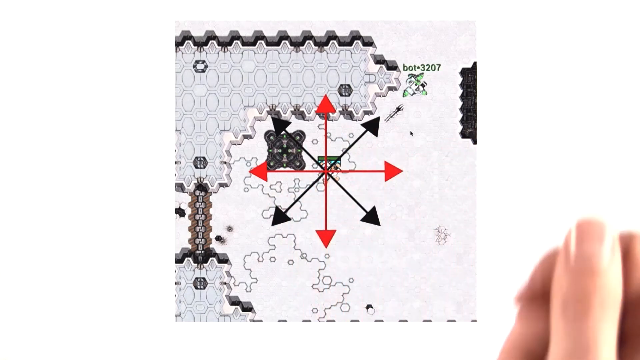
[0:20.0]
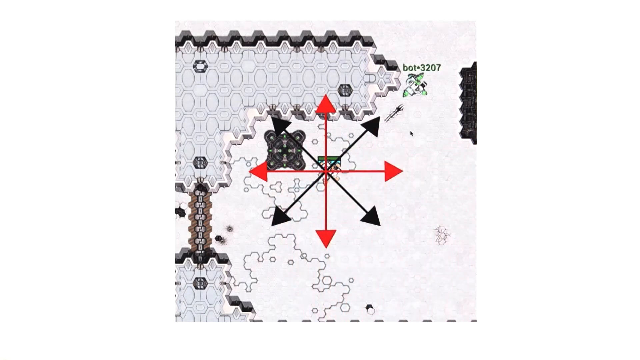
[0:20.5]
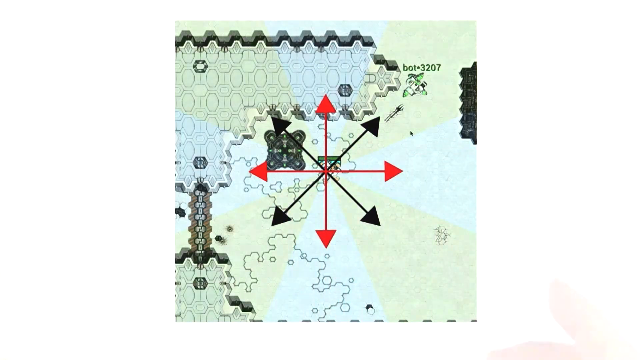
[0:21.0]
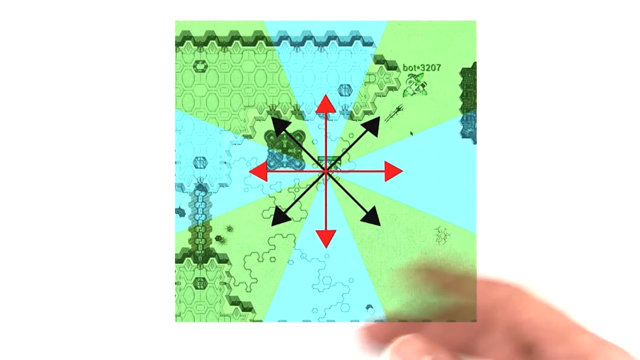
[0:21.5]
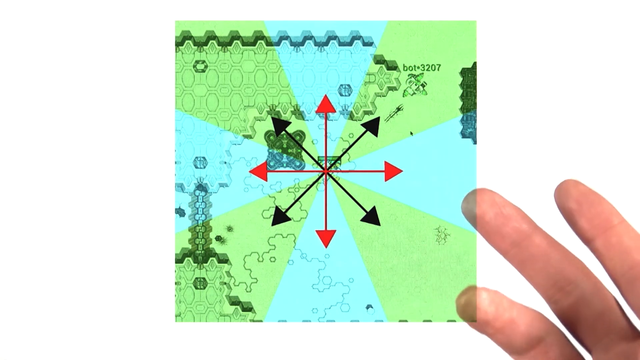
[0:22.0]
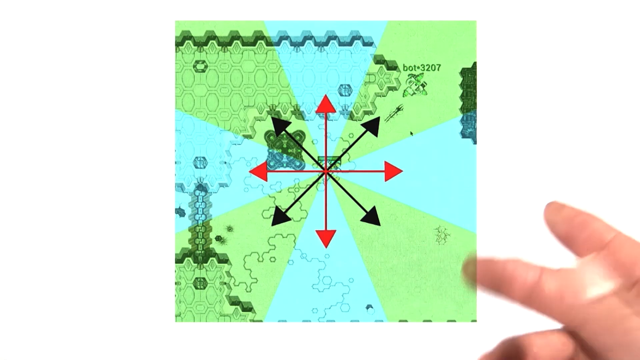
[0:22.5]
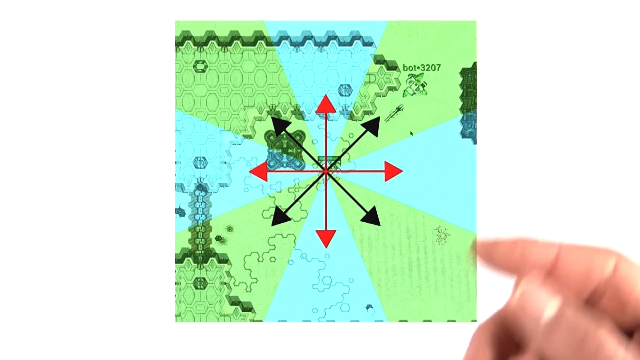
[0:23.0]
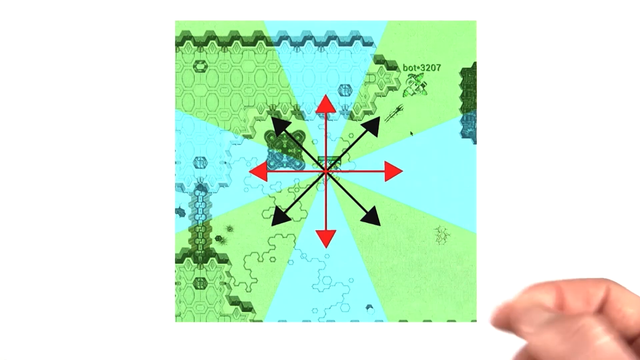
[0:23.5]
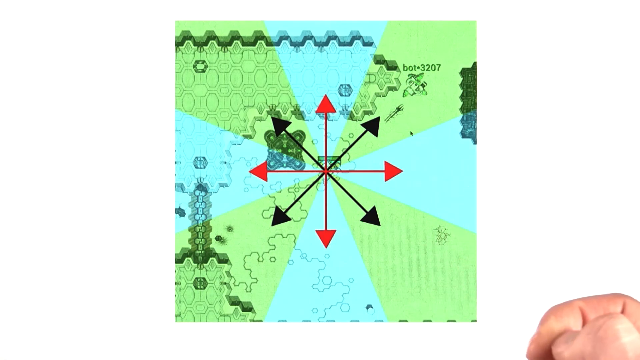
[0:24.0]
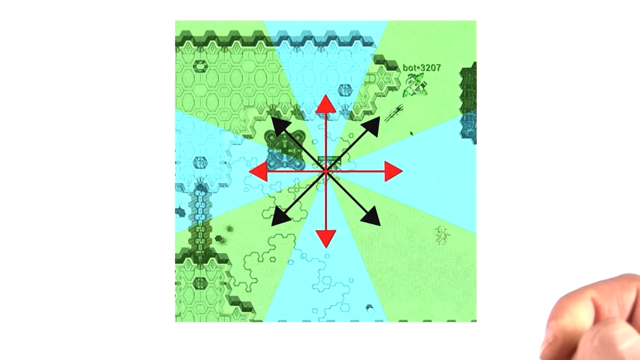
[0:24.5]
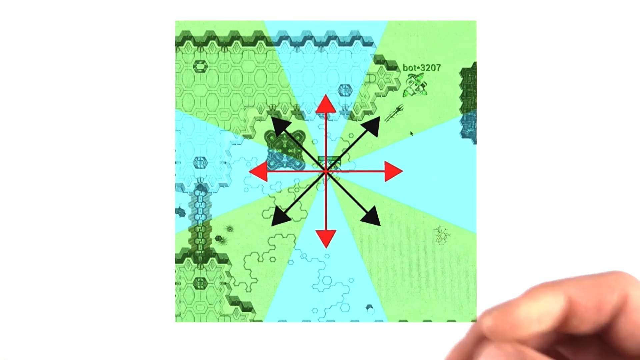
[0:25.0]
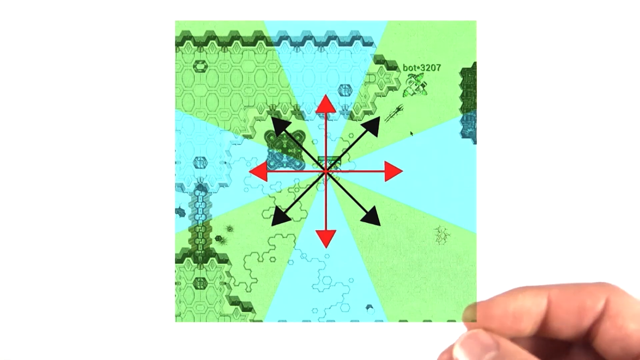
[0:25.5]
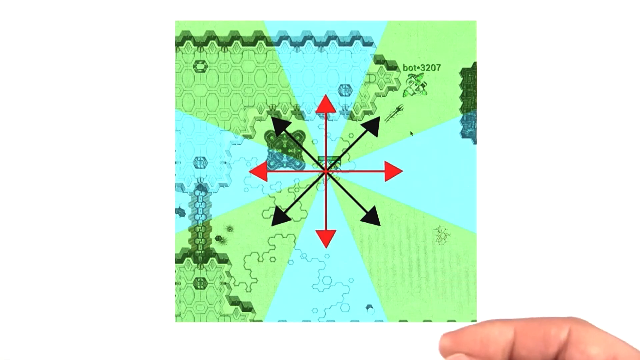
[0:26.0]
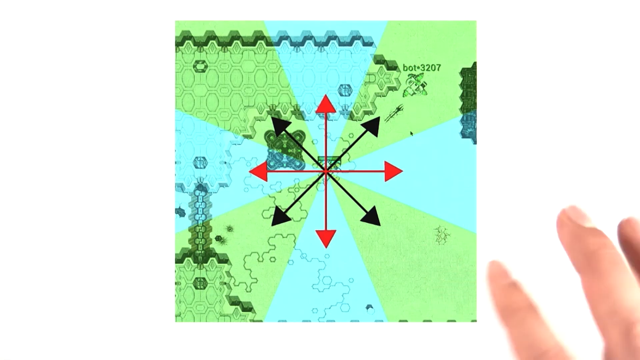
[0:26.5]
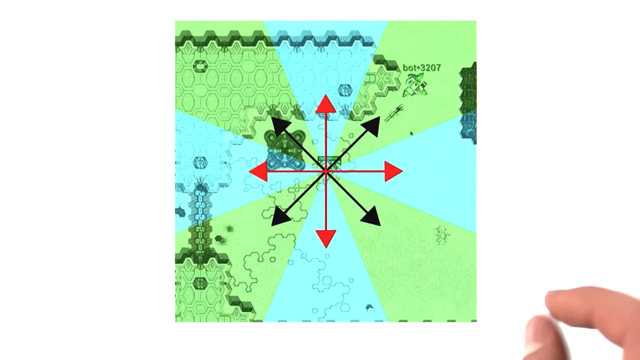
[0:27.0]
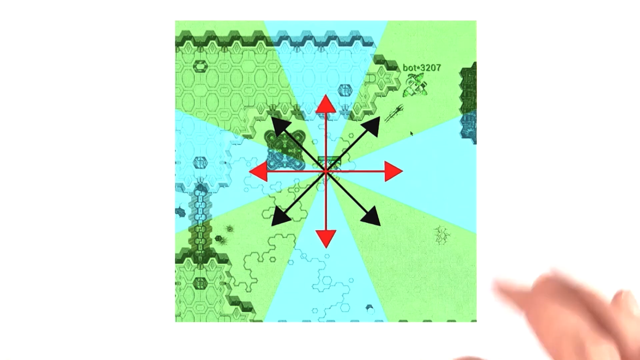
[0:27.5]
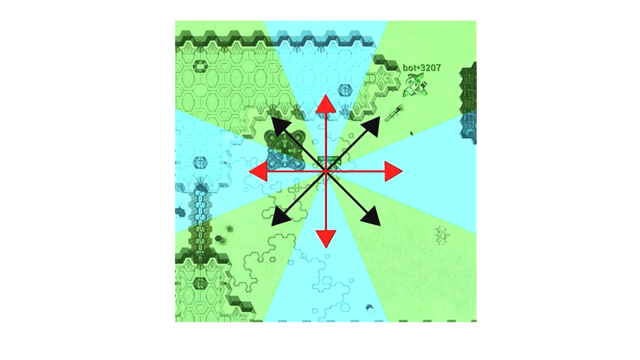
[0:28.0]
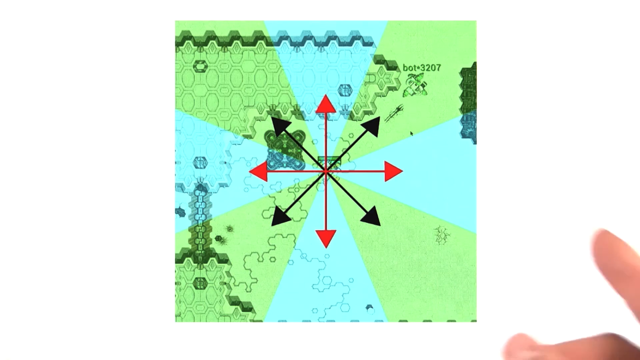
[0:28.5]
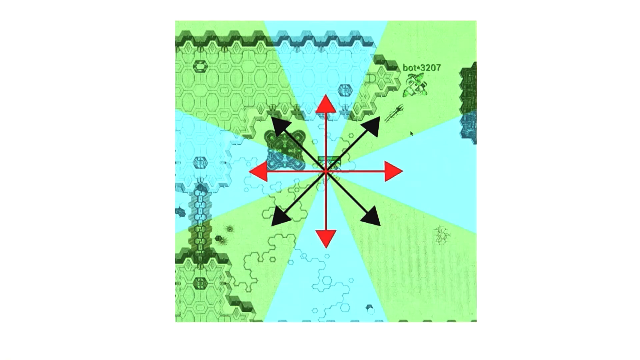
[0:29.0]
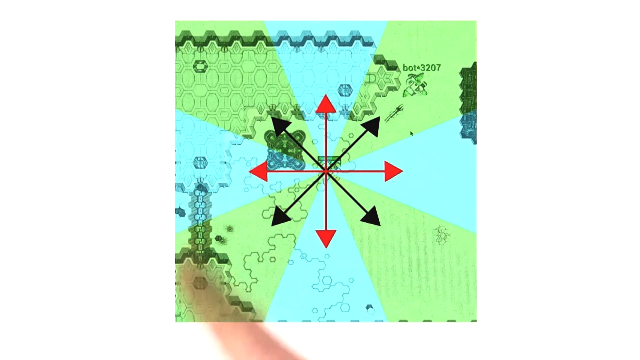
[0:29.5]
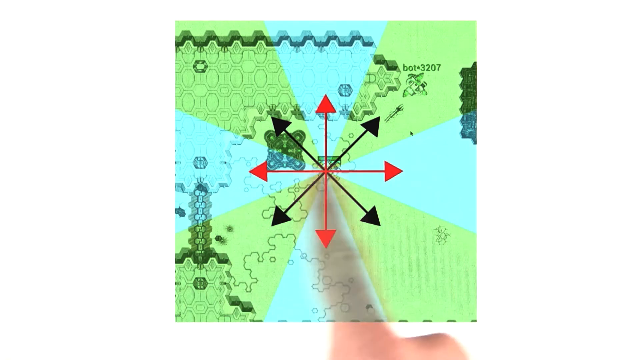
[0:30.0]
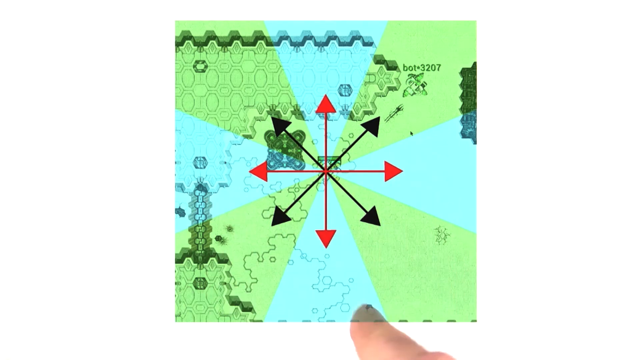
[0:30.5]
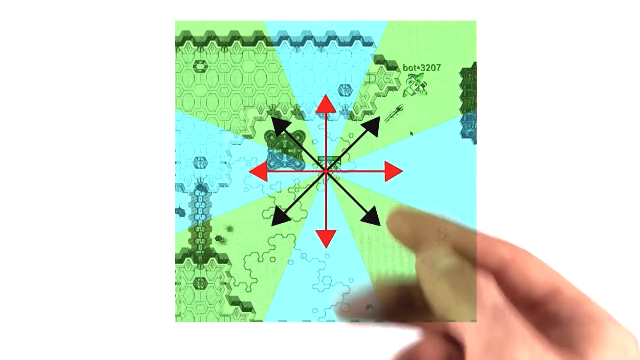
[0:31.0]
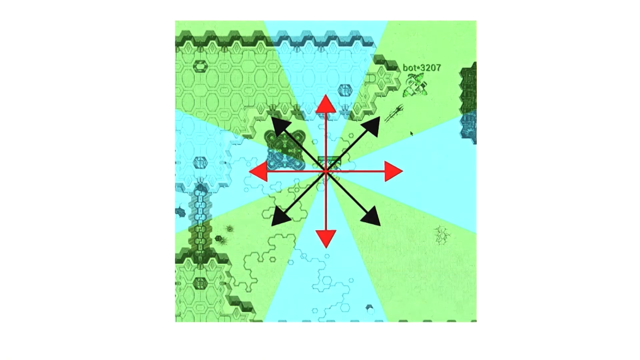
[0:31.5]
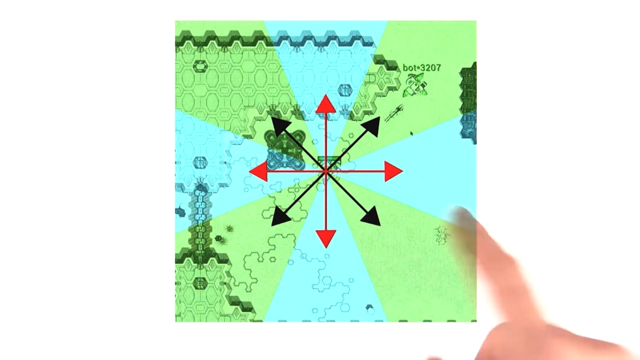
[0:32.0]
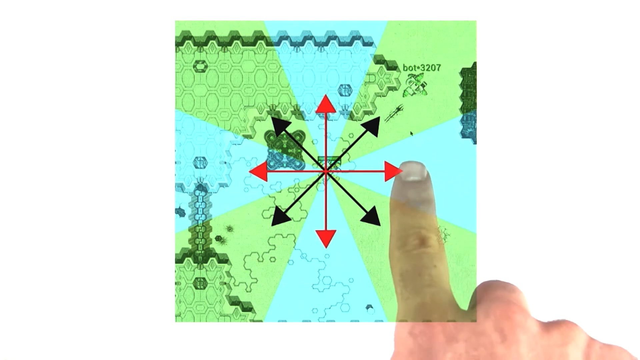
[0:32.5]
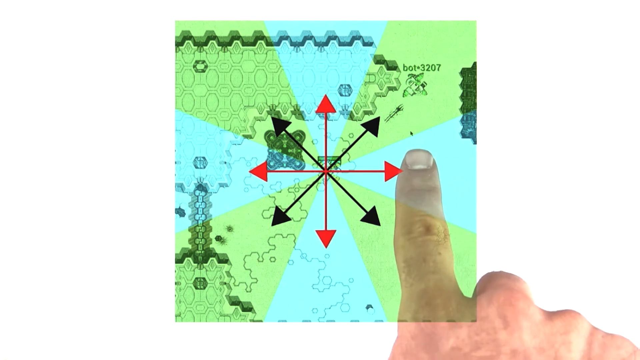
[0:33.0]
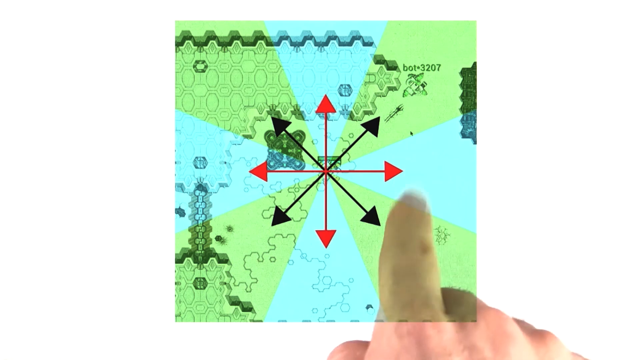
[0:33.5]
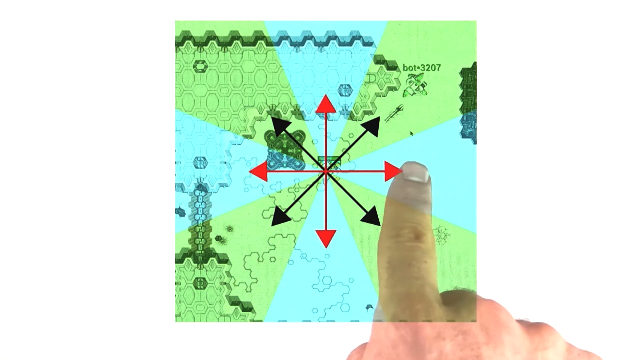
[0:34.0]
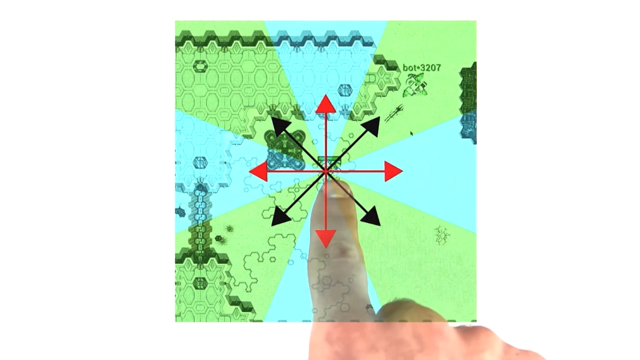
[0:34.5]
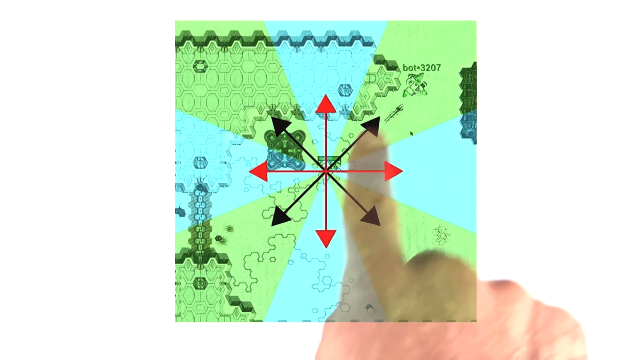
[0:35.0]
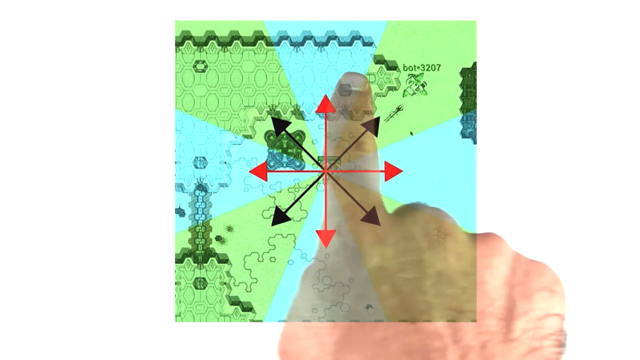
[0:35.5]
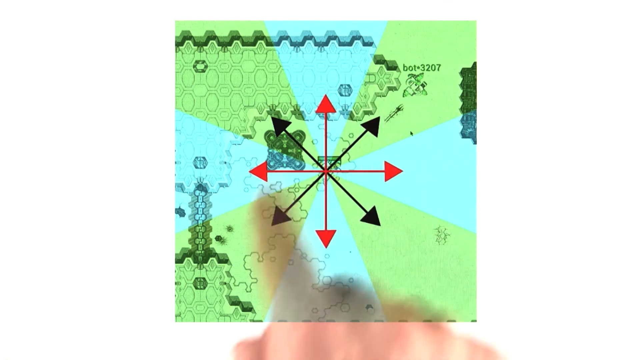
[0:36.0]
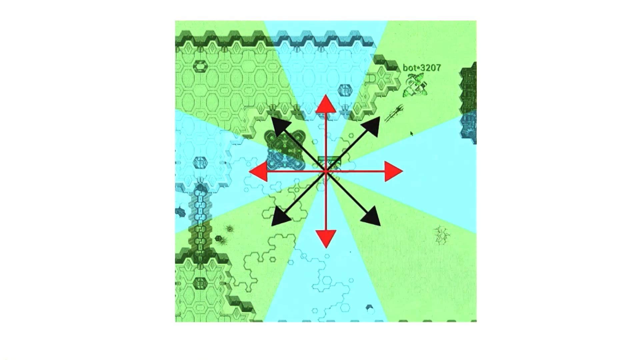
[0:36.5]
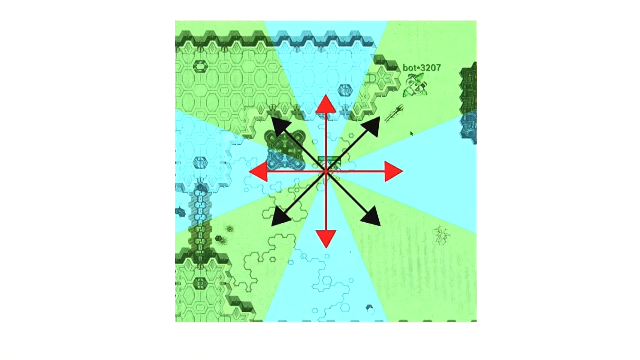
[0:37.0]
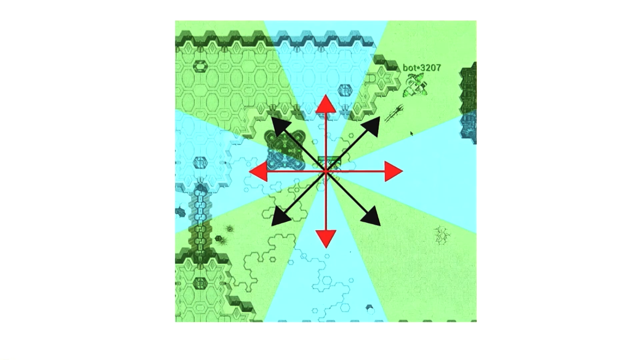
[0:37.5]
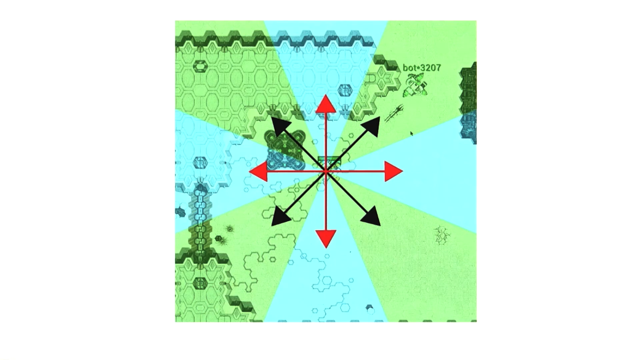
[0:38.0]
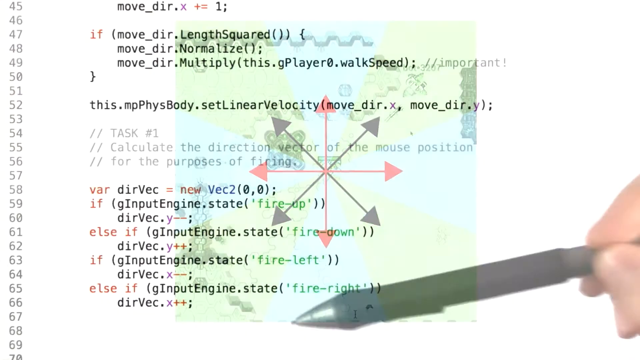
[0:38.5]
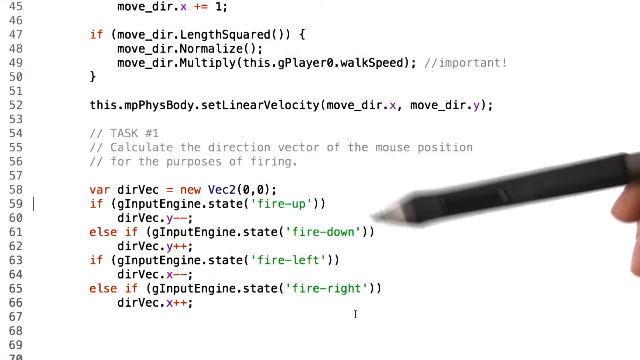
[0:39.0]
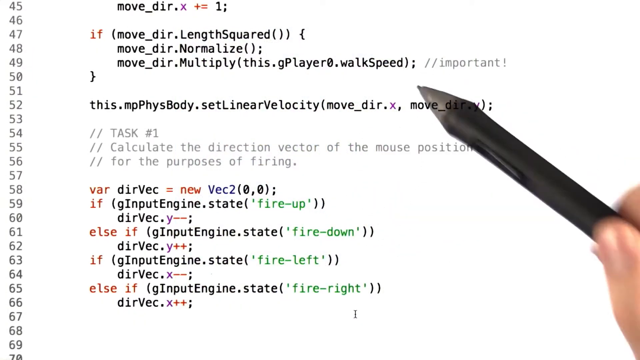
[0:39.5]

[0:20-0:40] A black and white game map has a red informational overlay, or compass, laid over the middle, with large arrows originating from the center and pointing outwards. Four red arrows point in the cardinal directions (up, down, left and right), while black arrows point in the intercardinal or diagonal directions (up-left, up-right, down-left and down-right). After a video transition, colors are added onto the map in alternating sections of green and teal, following the informational overlay so that each section of the map has a different color depending on which arrow it aligns with: the black arrows have green backgrounds and the red arrows have light blue. A lighter-skinned, Caucasian hand points at different areas of the image, highlighting information, before a transition shows a notepad of game code with lines 45 to 68.